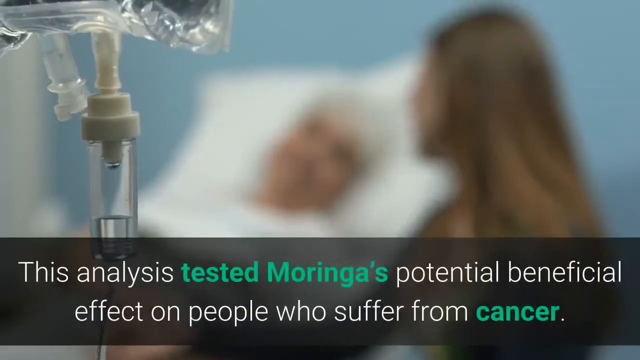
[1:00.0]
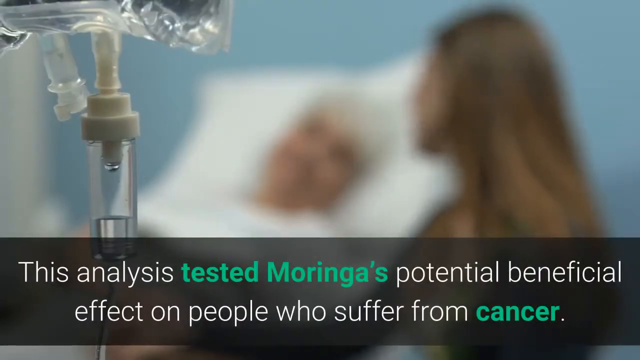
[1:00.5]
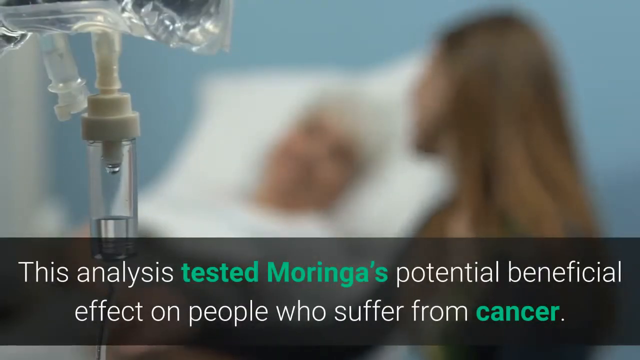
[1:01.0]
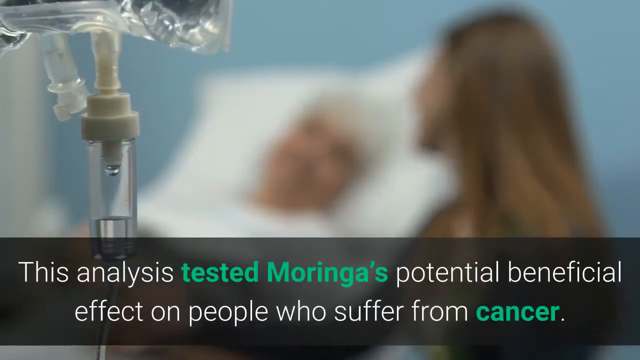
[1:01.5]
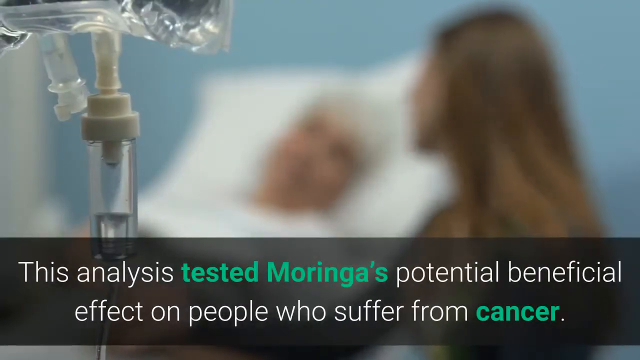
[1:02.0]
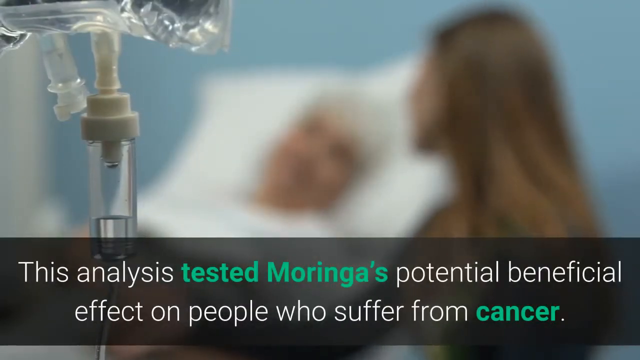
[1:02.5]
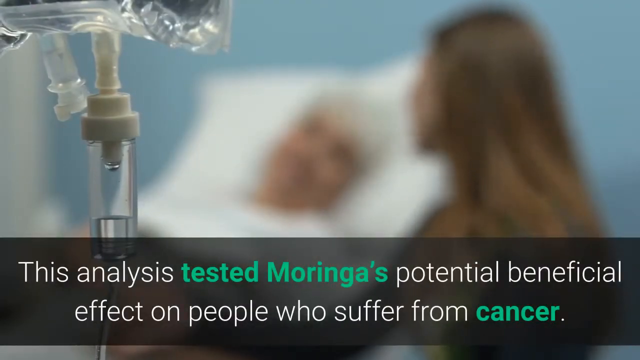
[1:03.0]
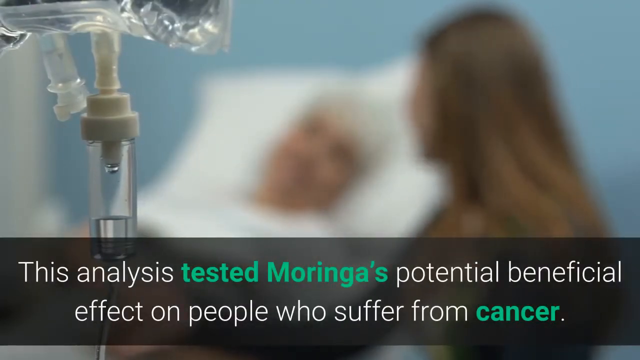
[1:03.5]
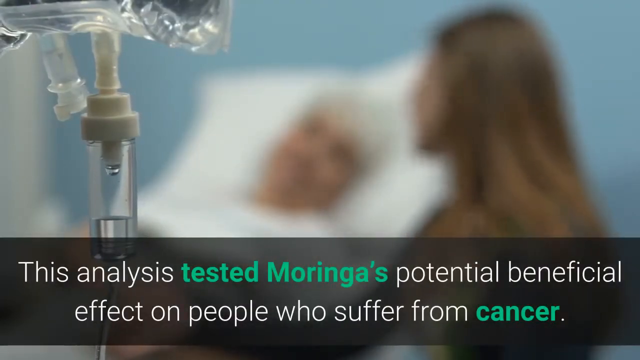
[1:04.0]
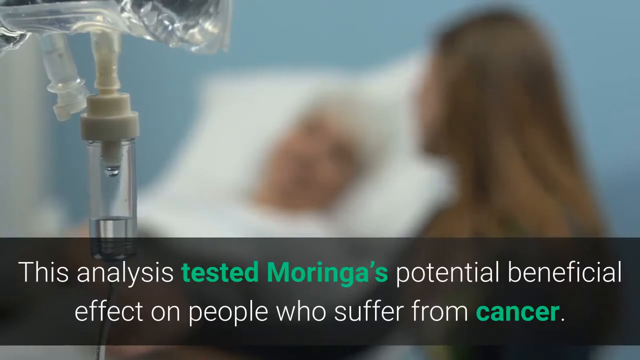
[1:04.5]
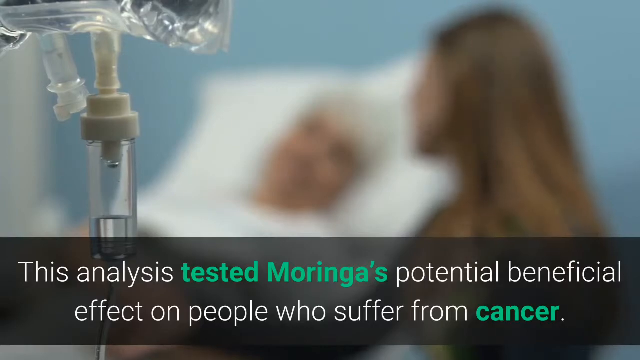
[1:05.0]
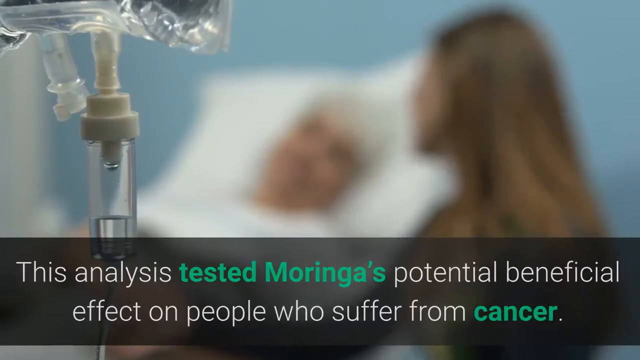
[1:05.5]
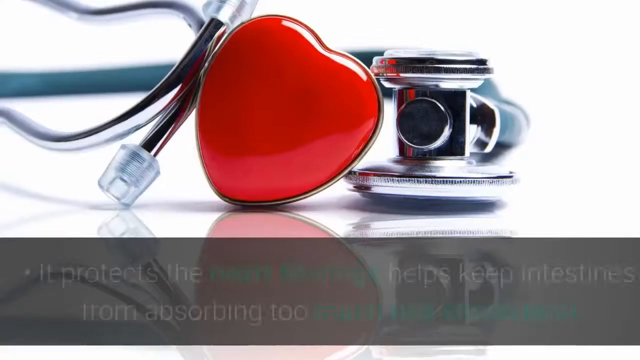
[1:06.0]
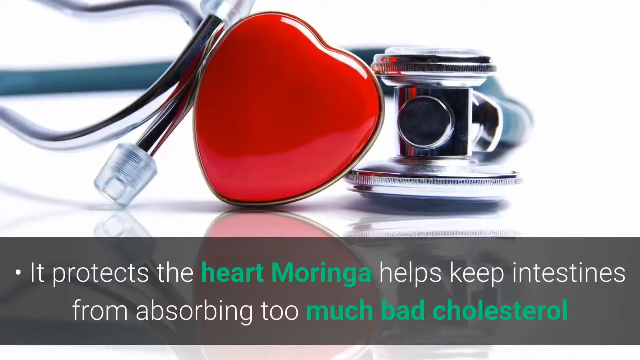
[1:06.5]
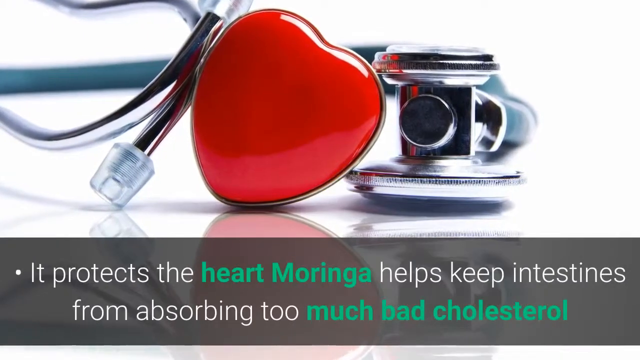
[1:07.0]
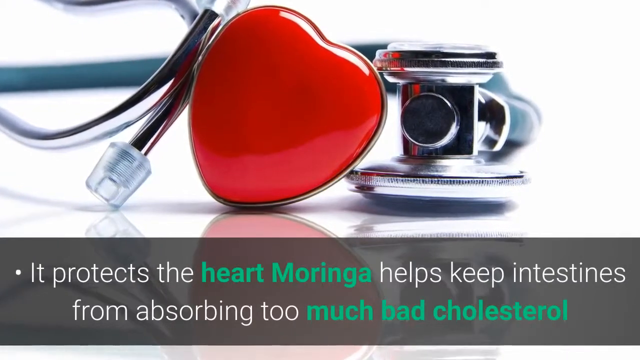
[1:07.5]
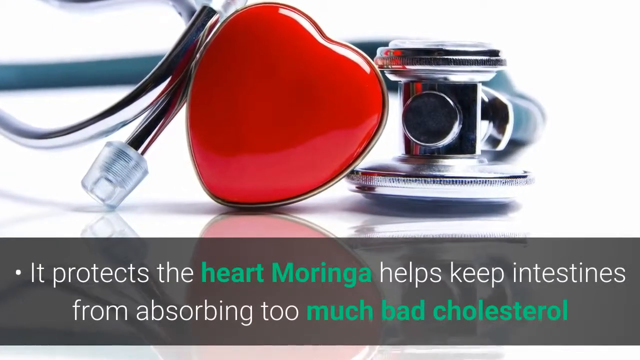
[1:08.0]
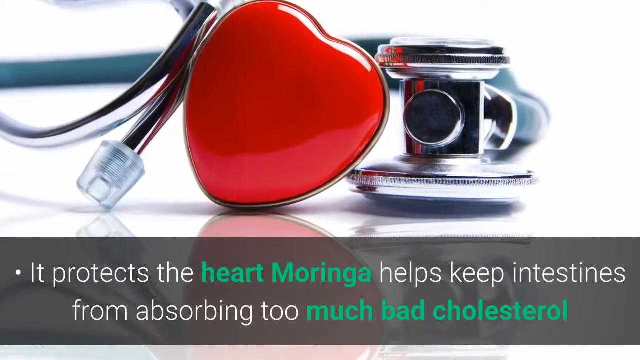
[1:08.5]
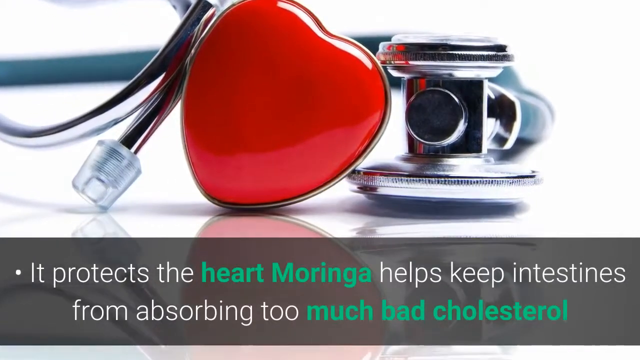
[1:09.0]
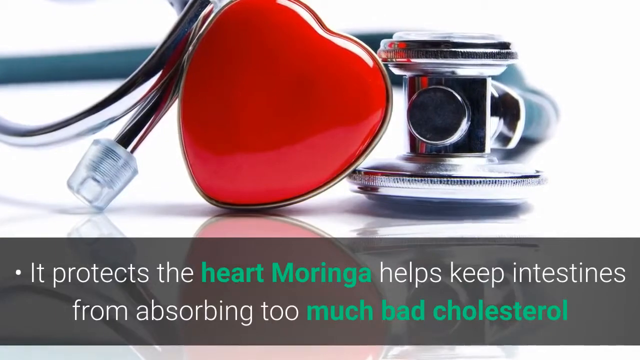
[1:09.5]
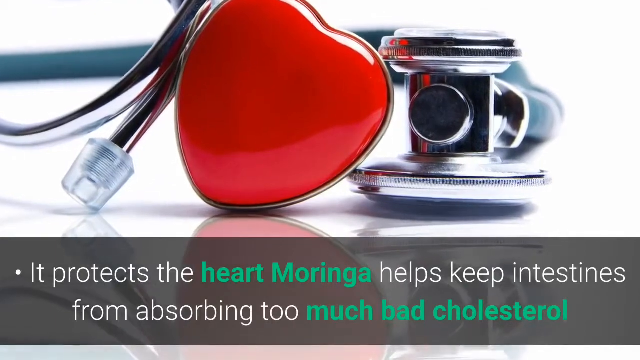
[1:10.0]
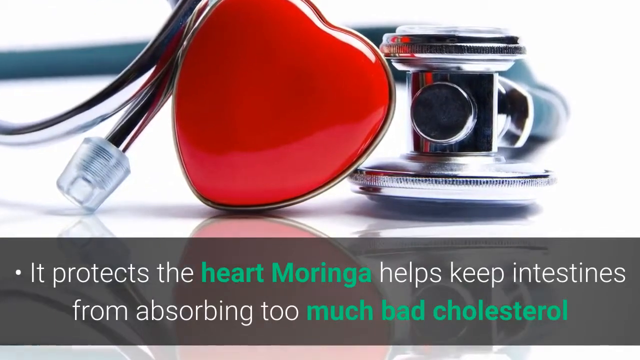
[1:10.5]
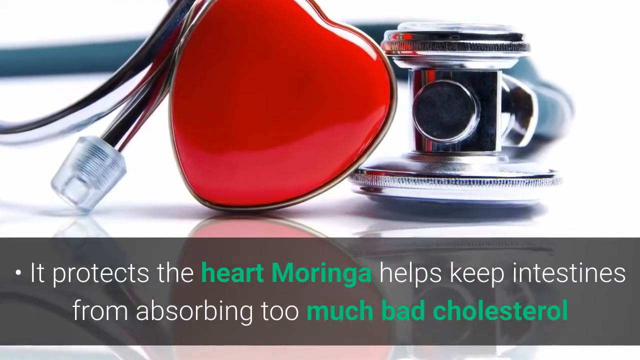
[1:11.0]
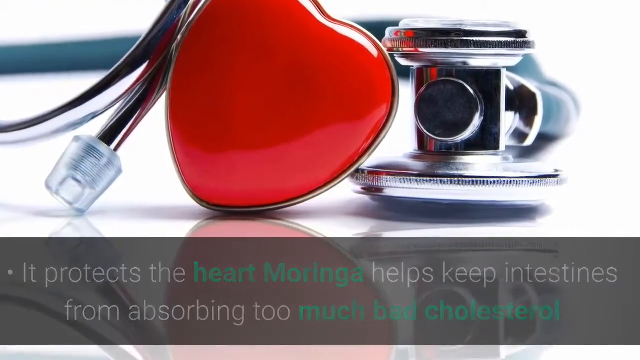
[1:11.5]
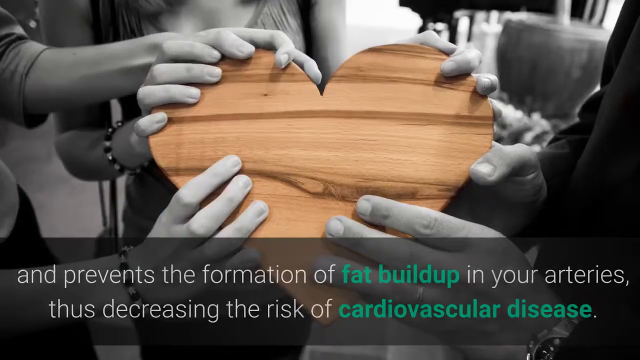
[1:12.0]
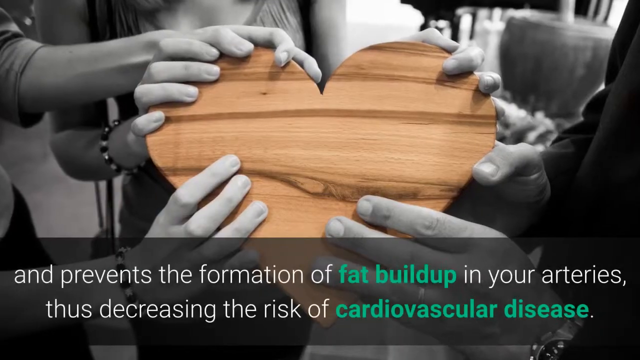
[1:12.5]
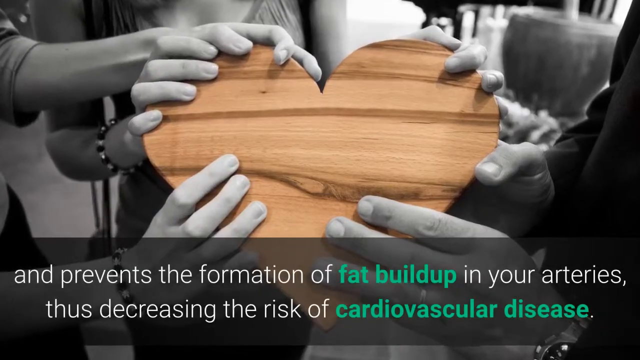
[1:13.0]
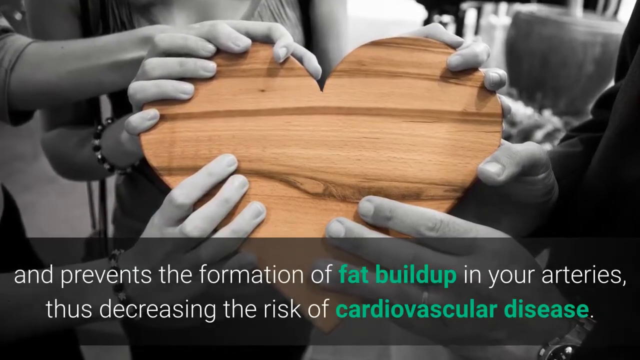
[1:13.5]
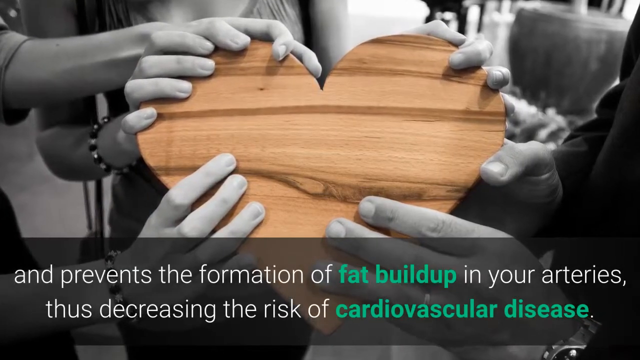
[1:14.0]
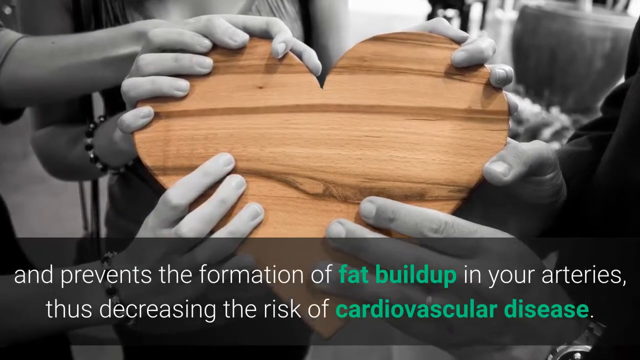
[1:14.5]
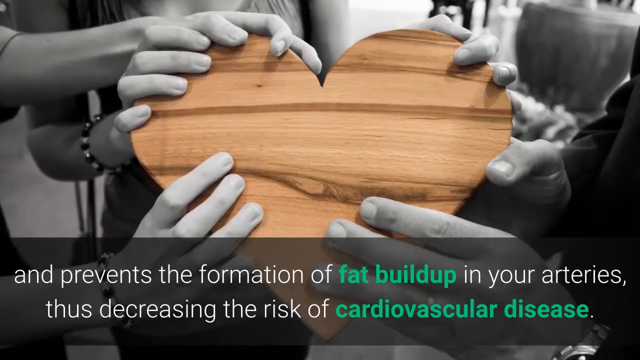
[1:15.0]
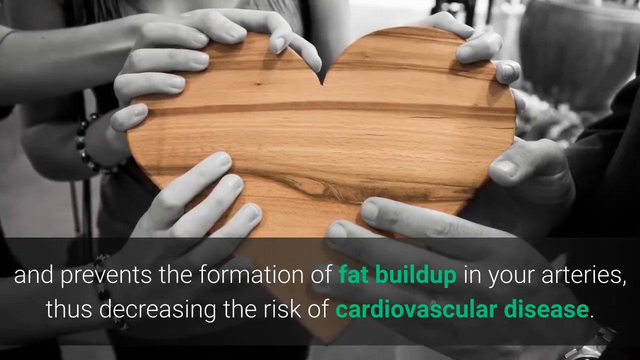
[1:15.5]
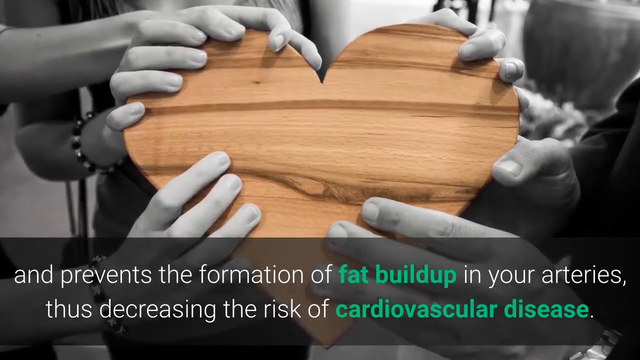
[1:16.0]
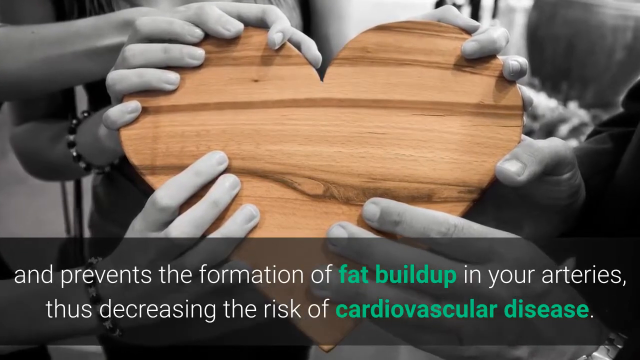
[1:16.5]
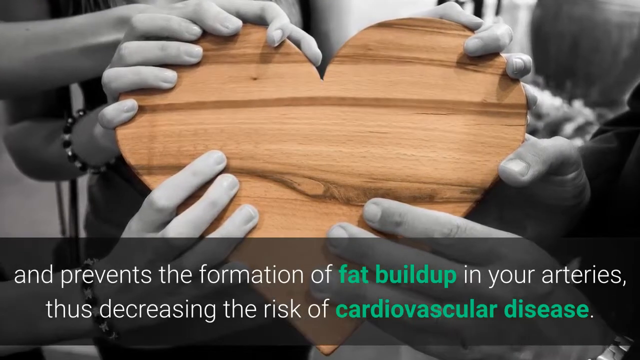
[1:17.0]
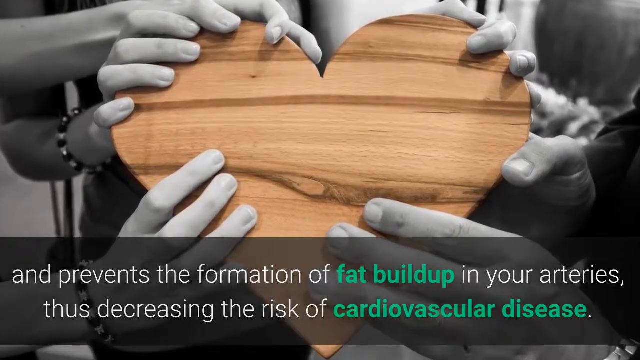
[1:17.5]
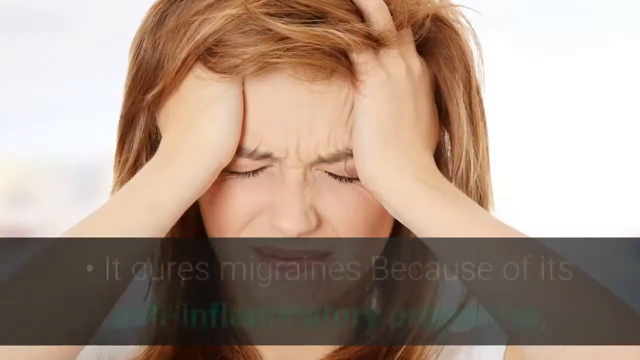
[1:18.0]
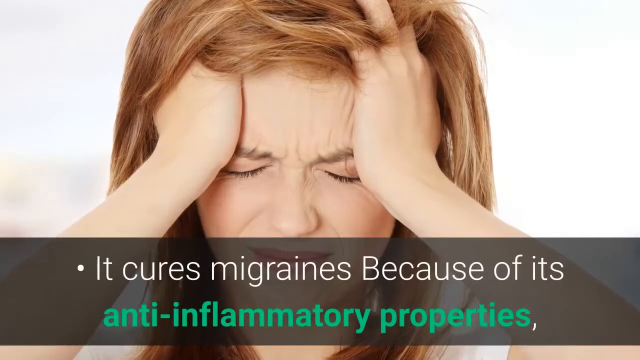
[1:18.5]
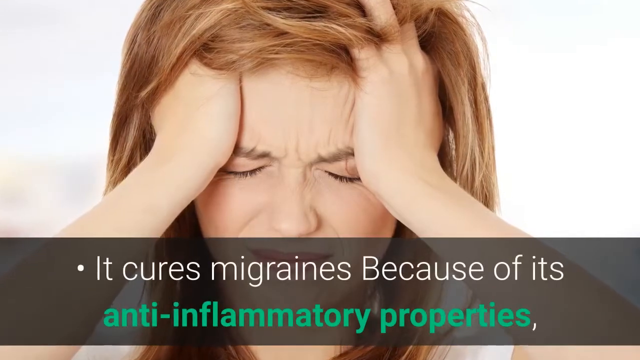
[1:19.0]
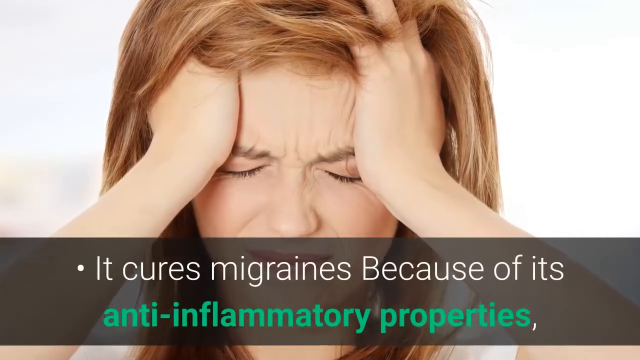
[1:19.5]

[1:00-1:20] A scene shows a man and a woman. Text reads "it protects the heart. Moringa helps keep intestines from absorbing too much bad cholesterol and prevents the formation of fat build-up in the arteries and decreases the risk of cardiovascular disease." Several hands are on top of a wooden heart, and a medical bag is on the left-hand side. Text then says moringa can cure migraines.